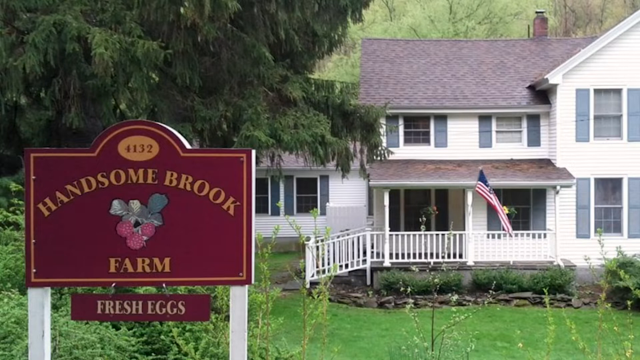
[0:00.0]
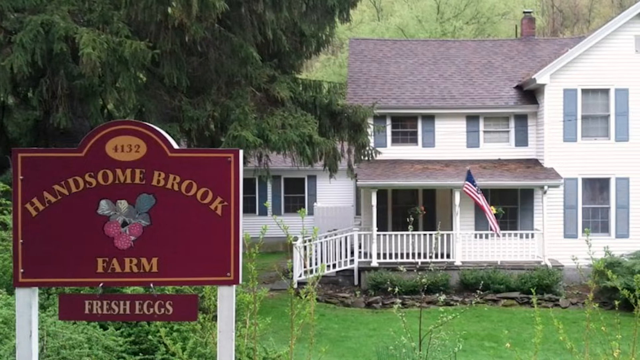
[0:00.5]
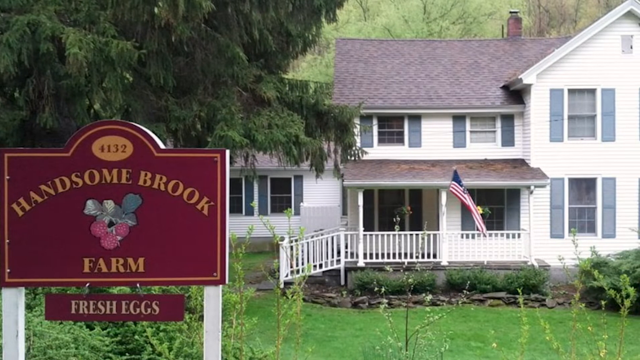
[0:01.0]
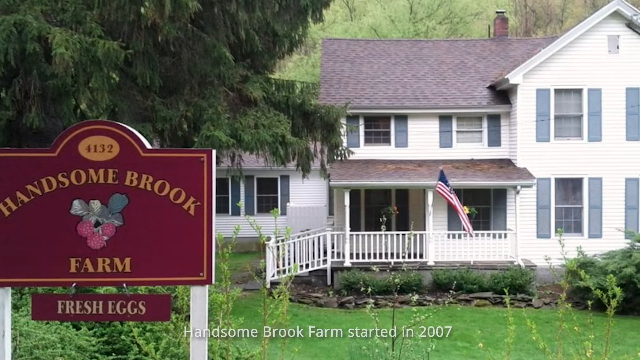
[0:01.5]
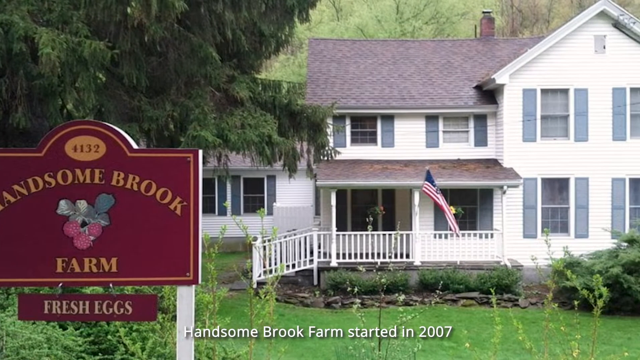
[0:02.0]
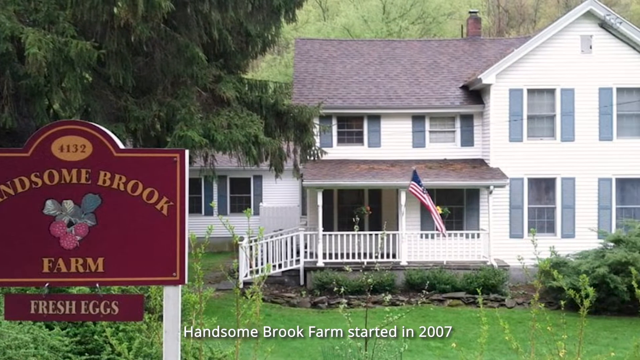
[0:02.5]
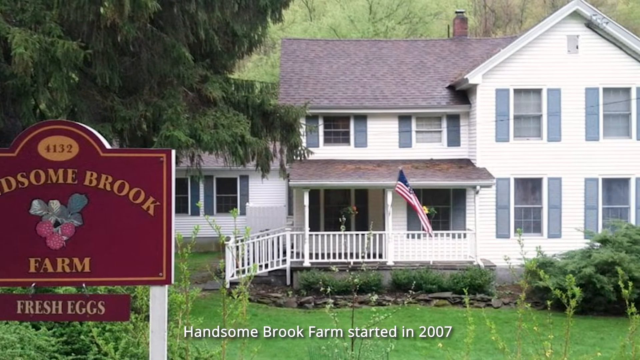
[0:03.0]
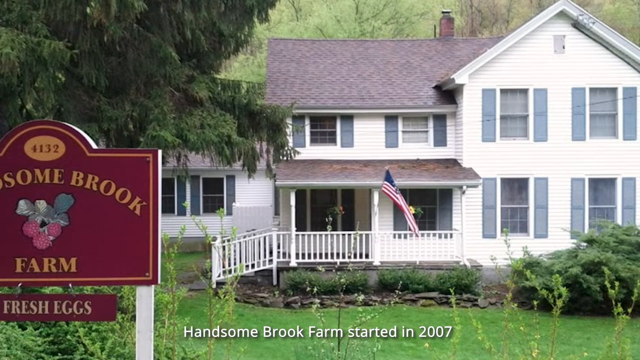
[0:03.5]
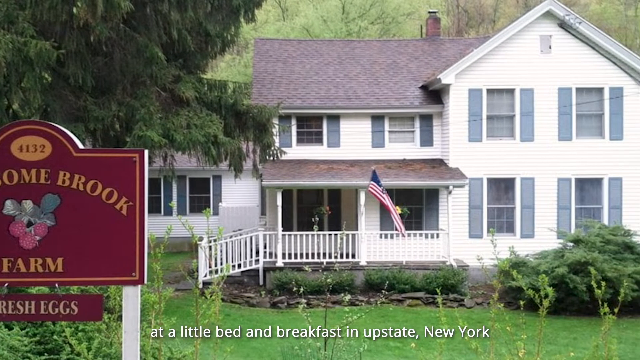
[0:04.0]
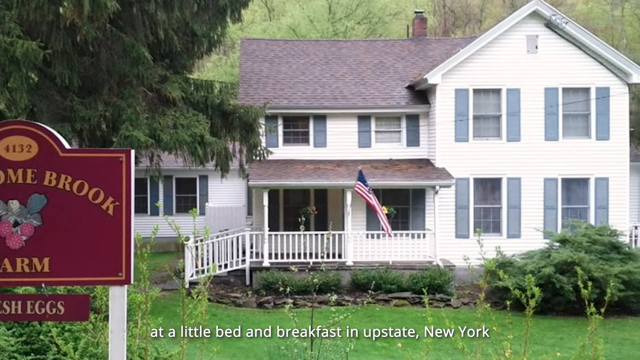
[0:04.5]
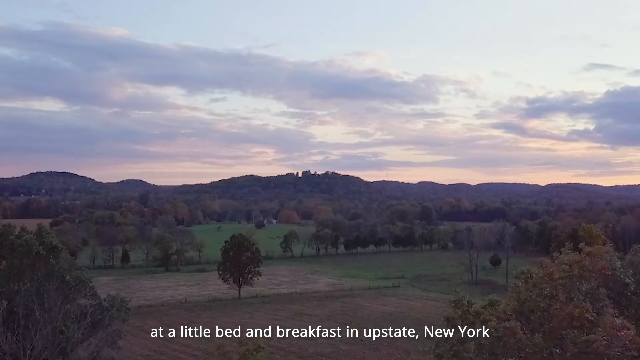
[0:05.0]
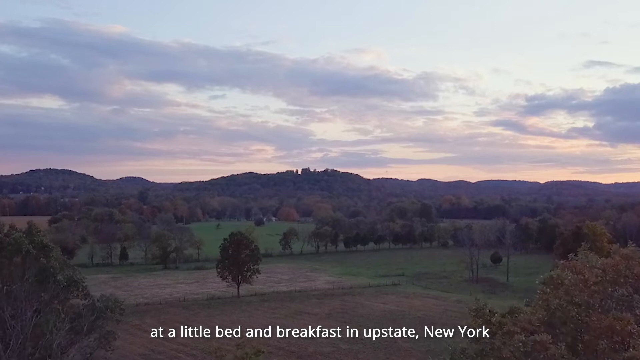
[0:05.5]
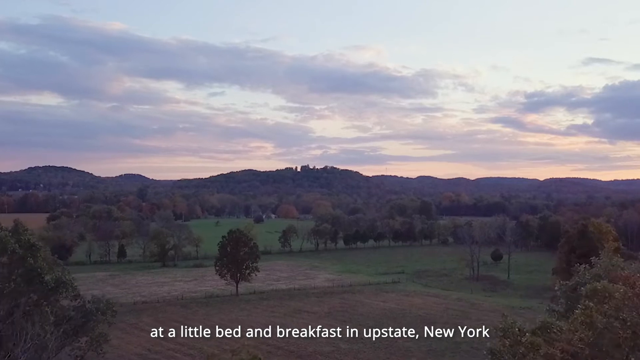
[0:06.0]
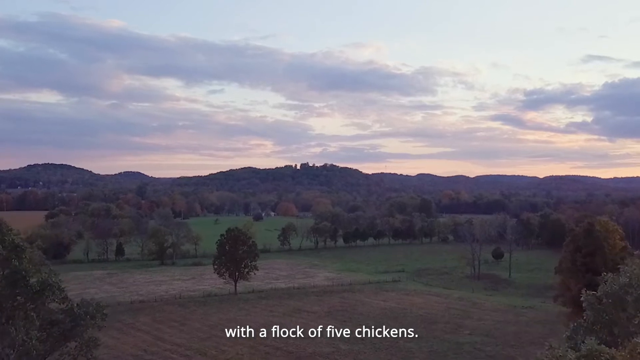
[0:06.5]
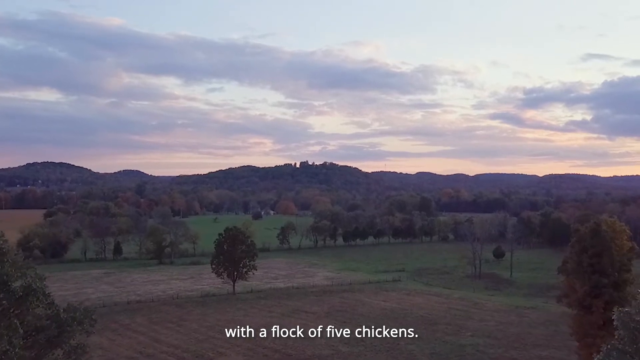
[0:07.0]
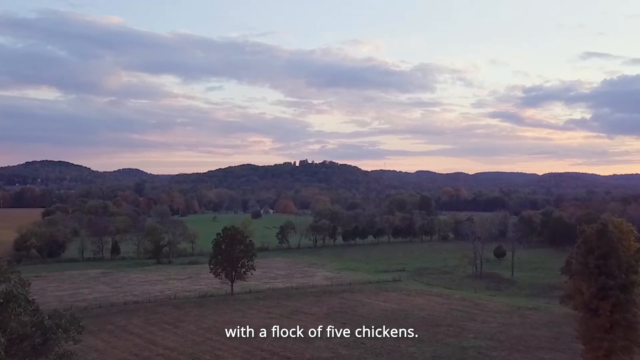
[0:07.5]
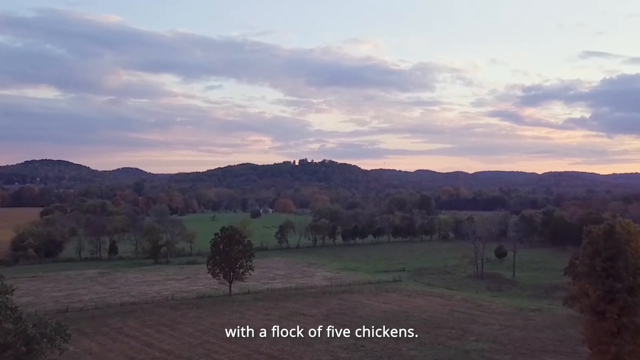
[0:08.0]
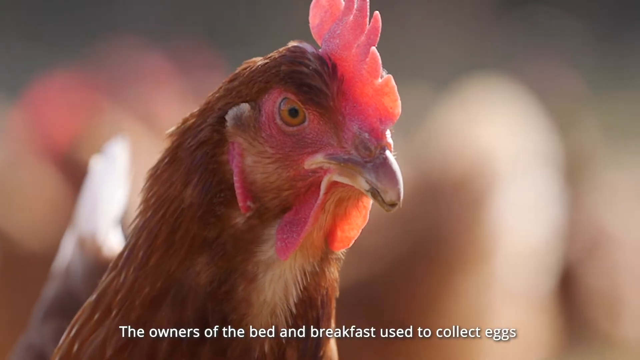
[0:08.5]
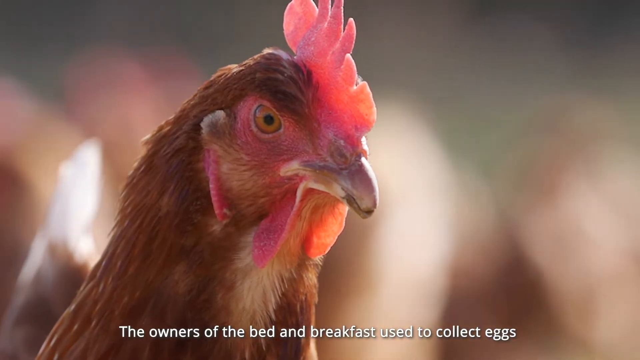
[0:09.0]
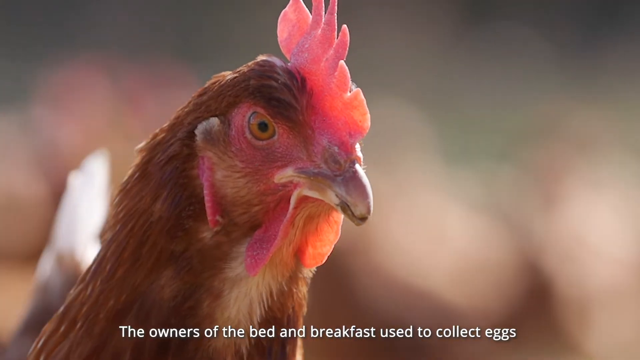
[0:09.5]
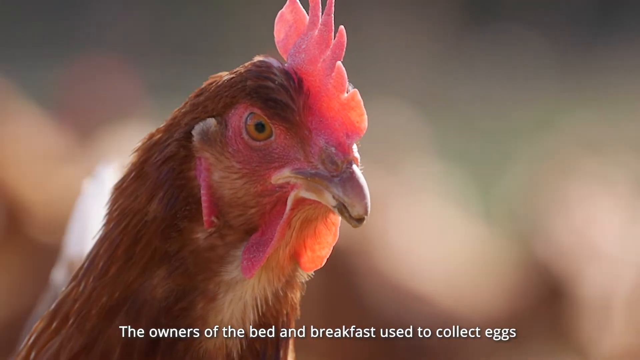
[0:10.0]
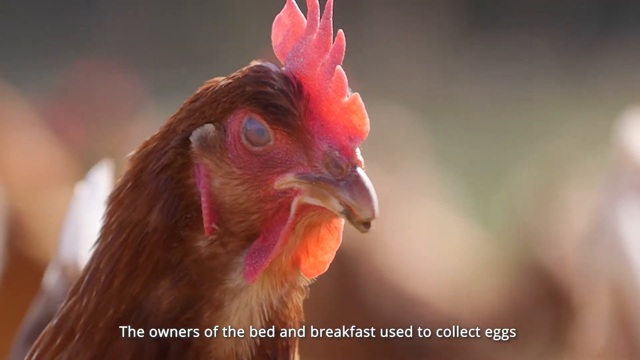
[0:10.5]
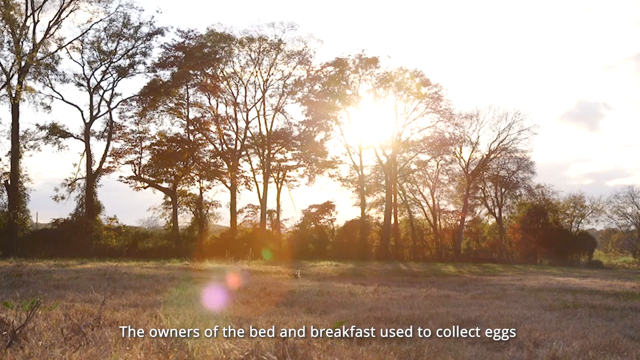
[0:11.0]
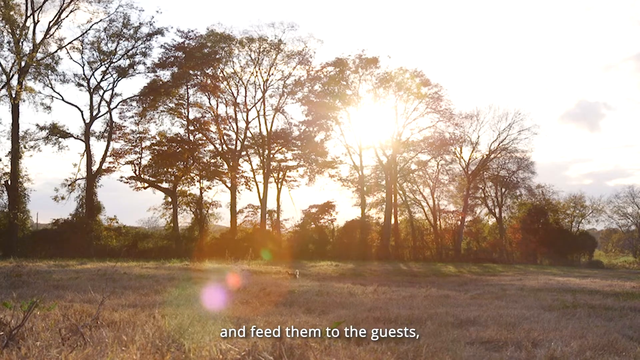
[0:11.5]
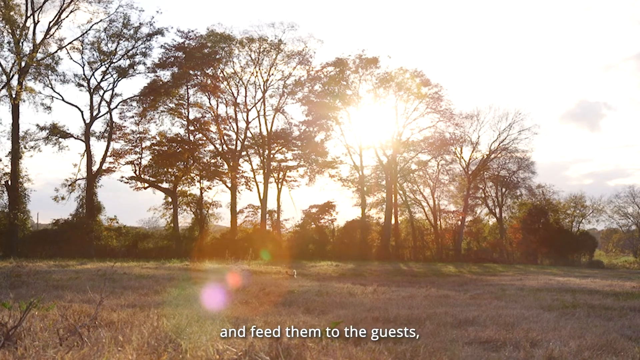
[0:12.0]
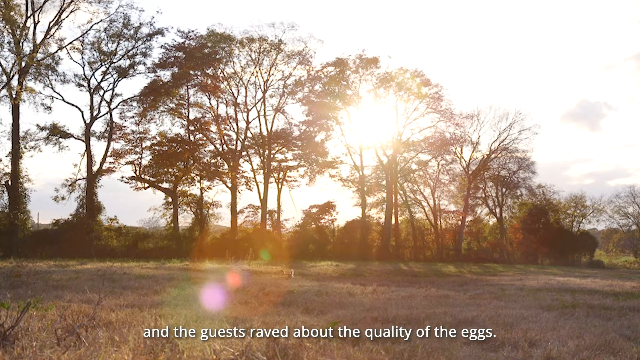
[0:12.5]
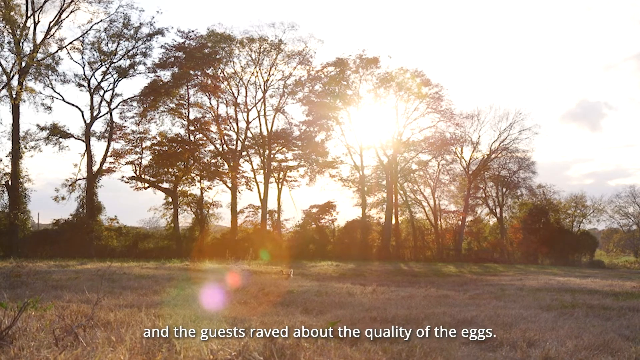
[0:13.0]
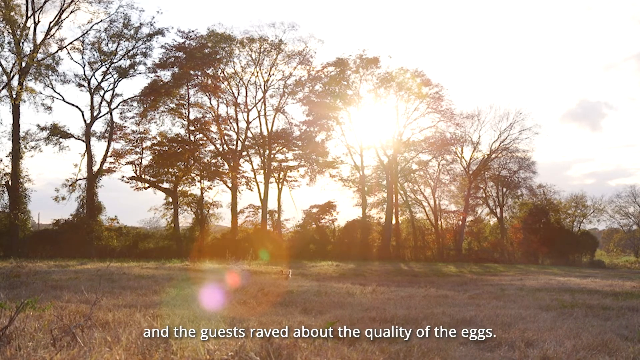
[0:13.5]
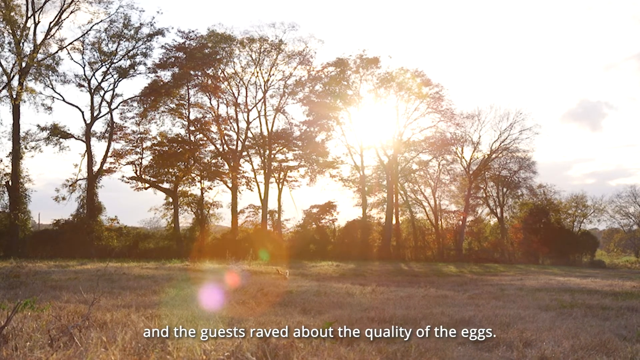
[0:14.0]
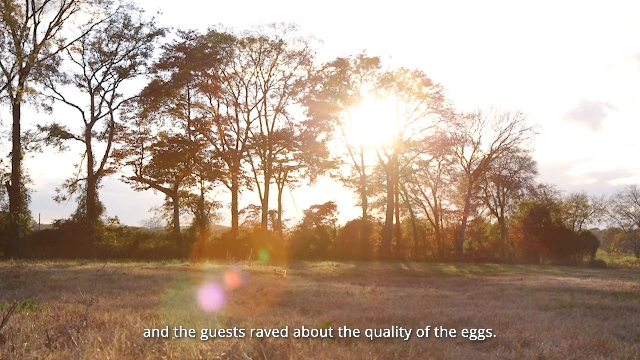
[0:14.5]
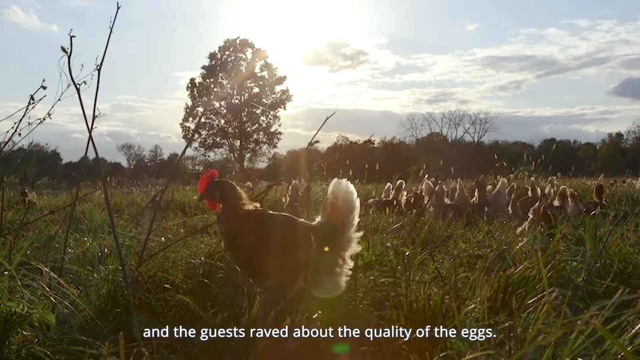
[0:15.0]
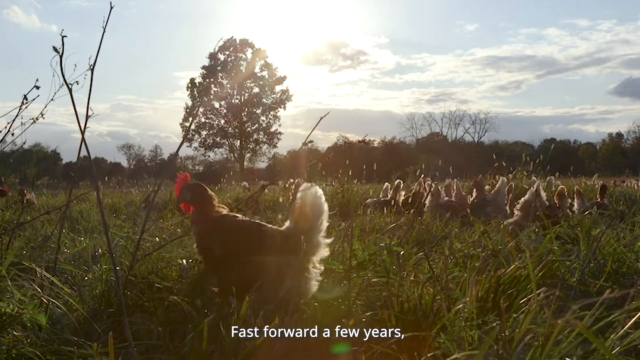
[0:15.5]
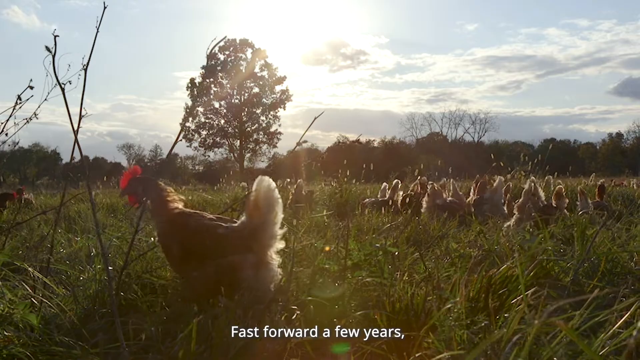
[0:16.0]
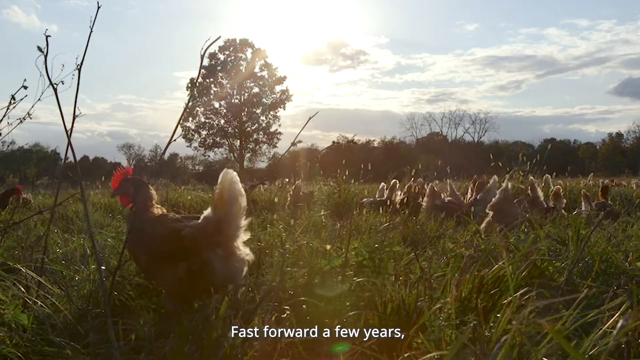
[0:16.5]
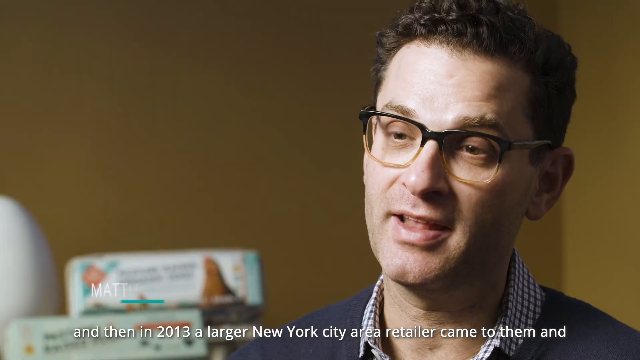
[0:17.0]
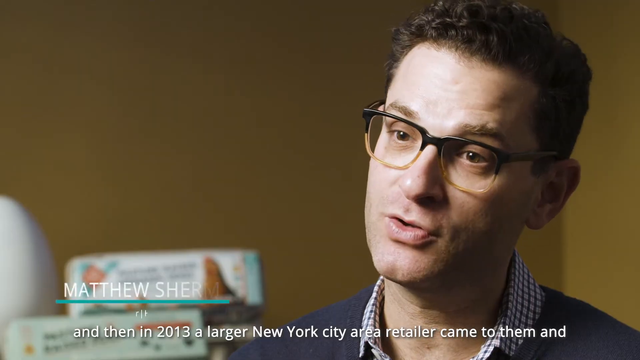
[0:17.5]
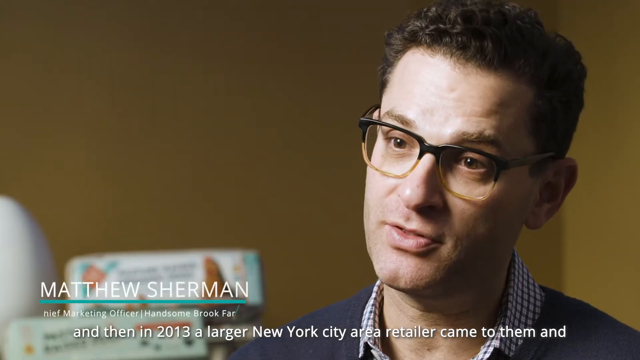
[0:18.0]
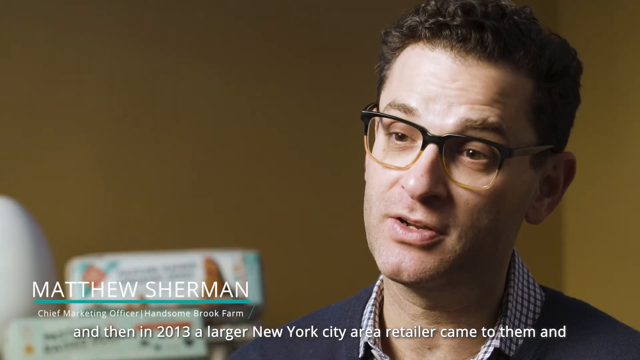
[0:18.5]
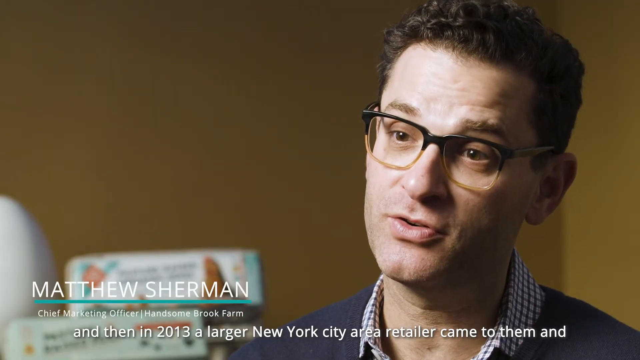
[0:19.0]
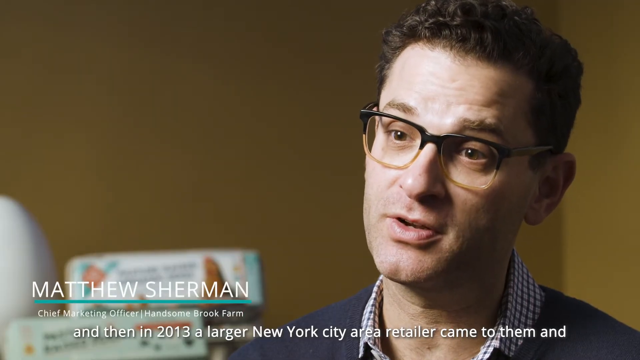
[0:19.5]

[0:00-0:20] The ad opens on a white farmhouse with blue shutters. It has a veranda at the front with an American flag on it, and a small pond in front of the veranda. A sign outside says "Handsome Brook Farm," with a smaller sign underneath saying "Fresh Eggs." Captions read: "Handsome Brook Farm started in 2007. At a little bed and breakfast in upstate New York with a flock of five chickens, the owners of the bed and breakfast used to collect eggs and feed them to the guests and the guests raved about the quality of the eggs. Fast forward a few years and then in 2013 a larger New York City area retailer came to them and". After the camera pans across the farmhouse, the shot cuts to grass-covered fields with lots of trees and hills in the distance, apparently at sunrise or sunset. Next come a close-up of a chicken, a close-up of the sun rising behind some trees, and a field or meadow with lots of chickens wandering around loose. The video then cuts to an interview with a man whom a caption identifies as Matthew Sherman, Chief Marketing Officer for Handsome Brook Farm. He looks to be in his 30s or 40s, is white, has brown hair and horn-rimmed glasses, and wears a checked shirt and a sweater.